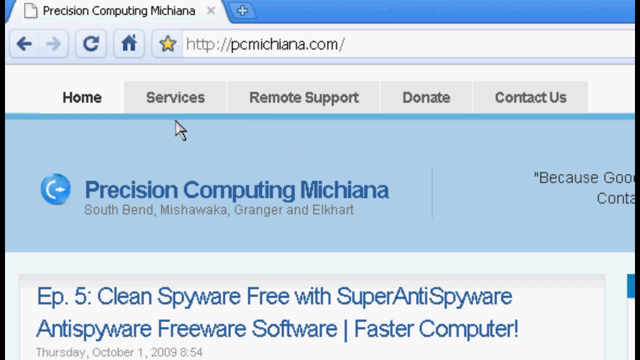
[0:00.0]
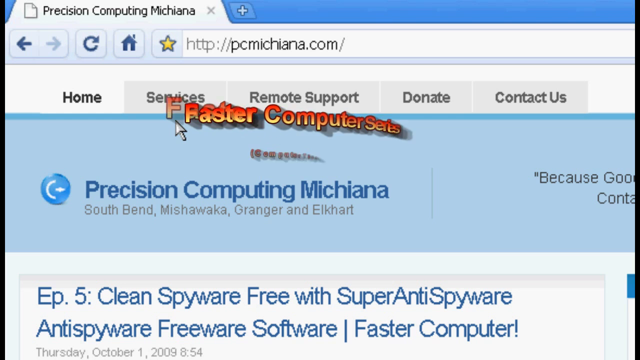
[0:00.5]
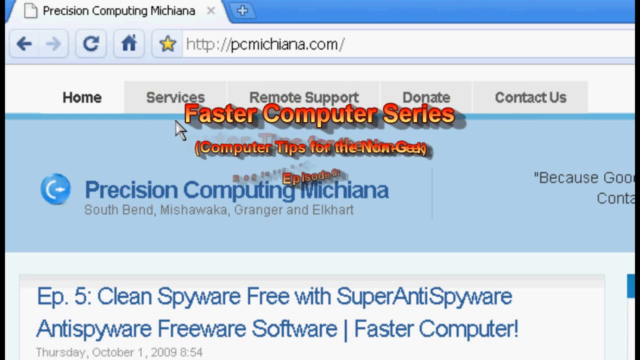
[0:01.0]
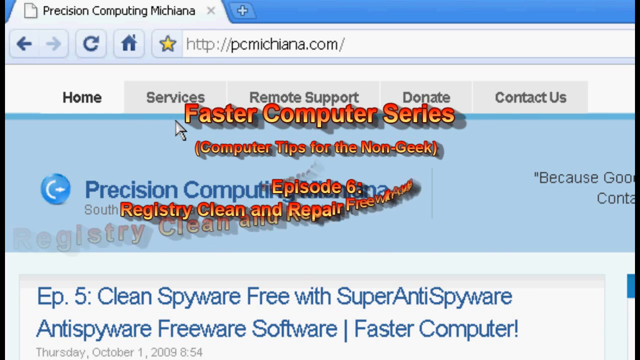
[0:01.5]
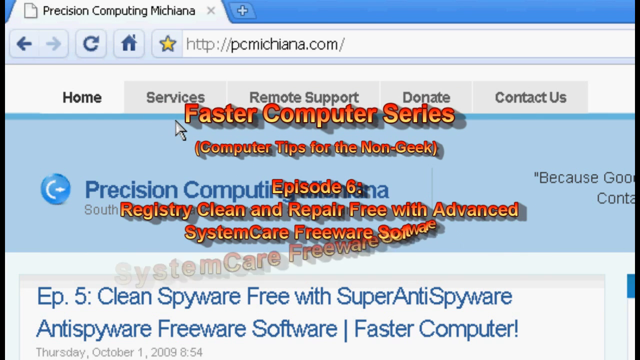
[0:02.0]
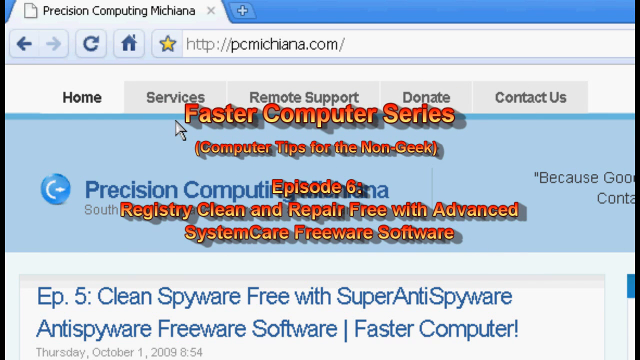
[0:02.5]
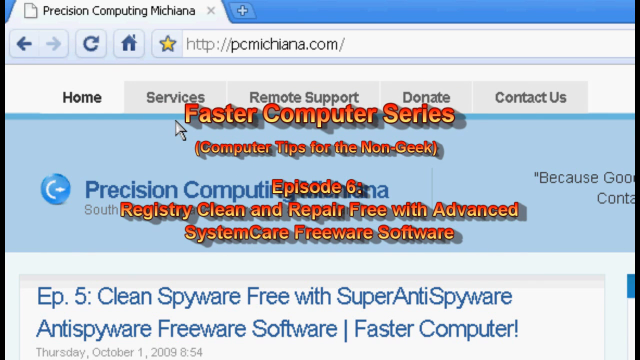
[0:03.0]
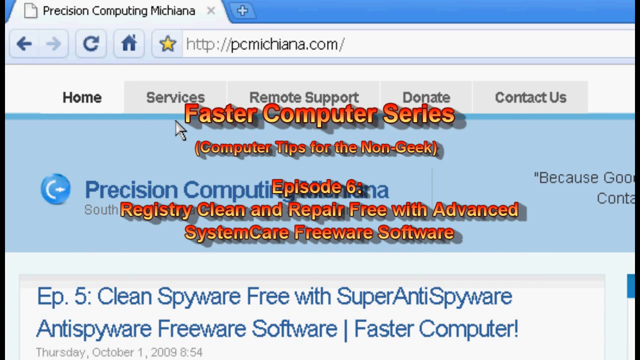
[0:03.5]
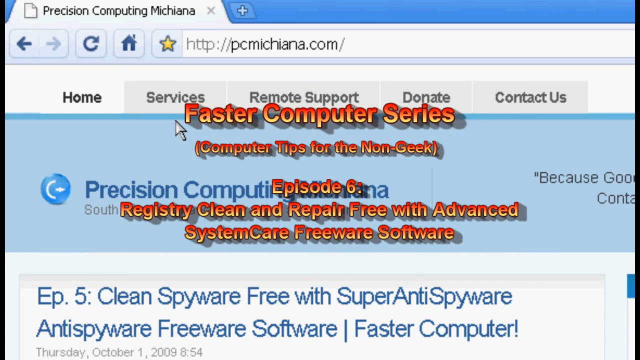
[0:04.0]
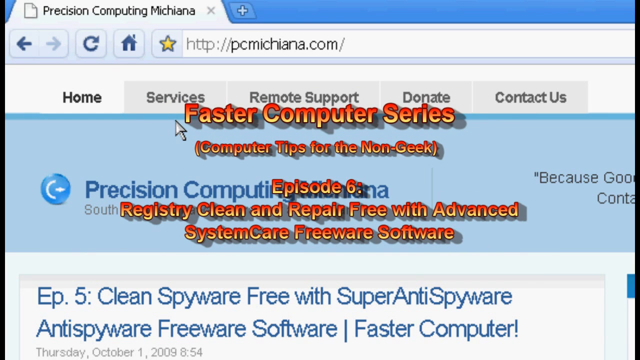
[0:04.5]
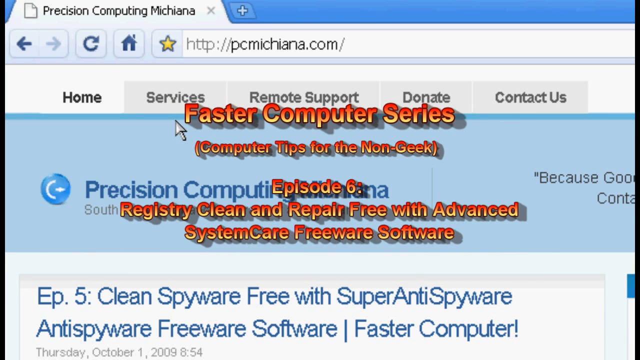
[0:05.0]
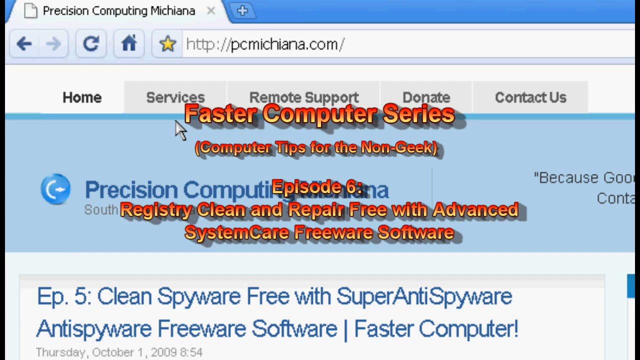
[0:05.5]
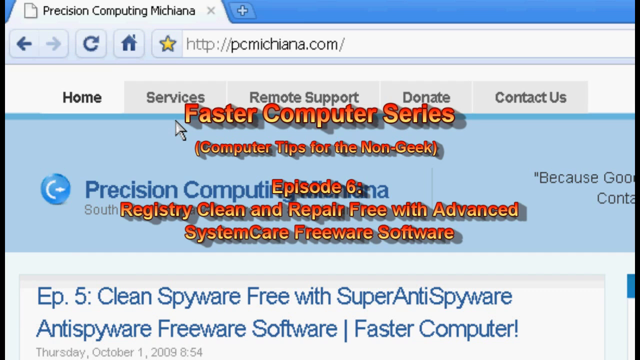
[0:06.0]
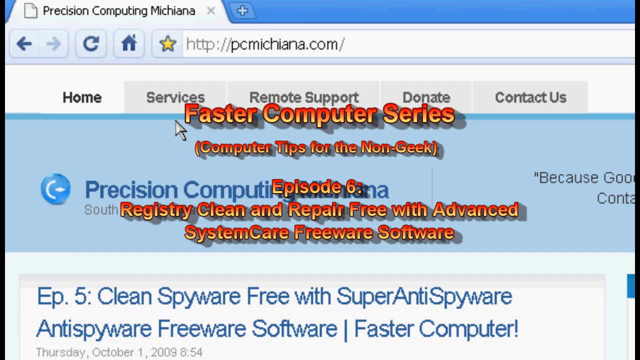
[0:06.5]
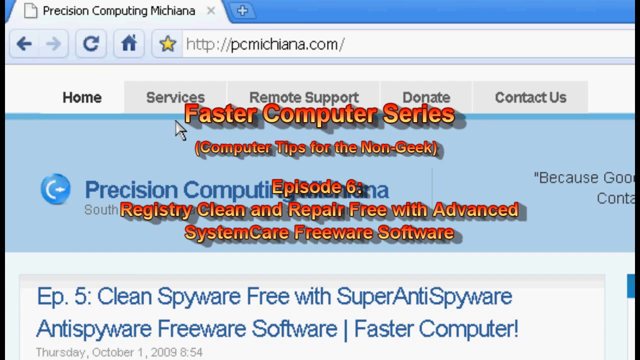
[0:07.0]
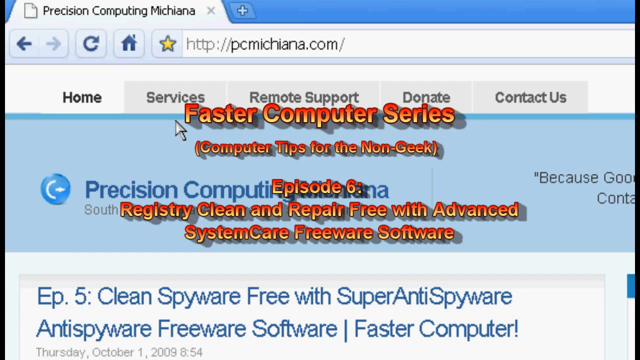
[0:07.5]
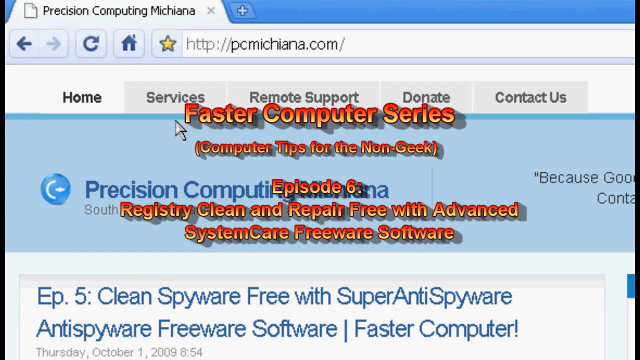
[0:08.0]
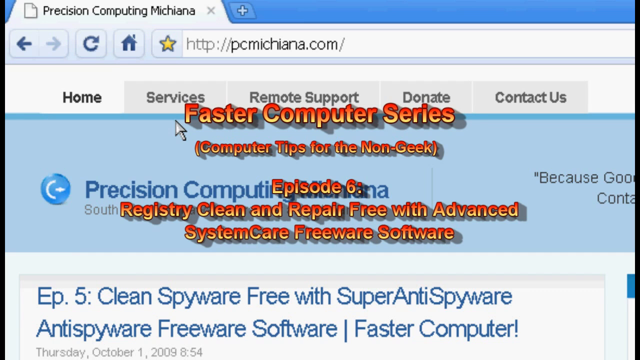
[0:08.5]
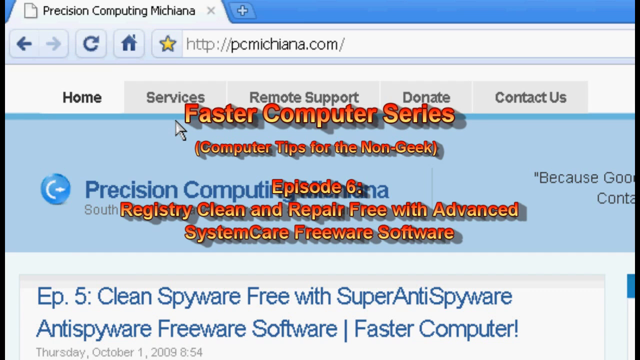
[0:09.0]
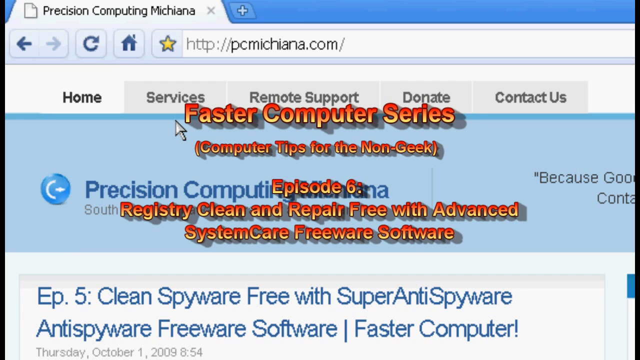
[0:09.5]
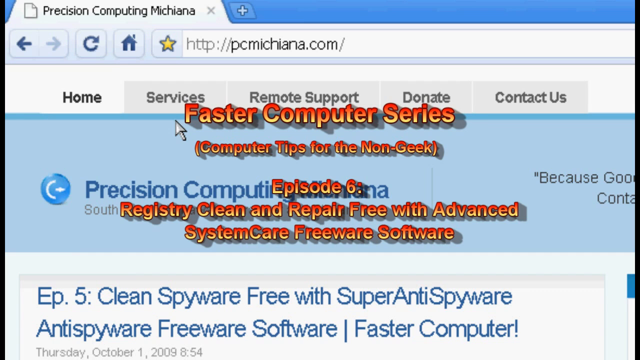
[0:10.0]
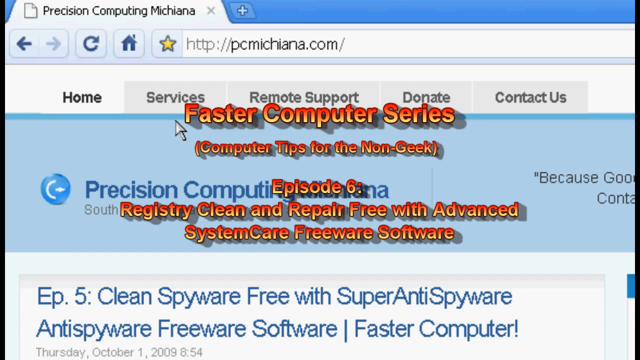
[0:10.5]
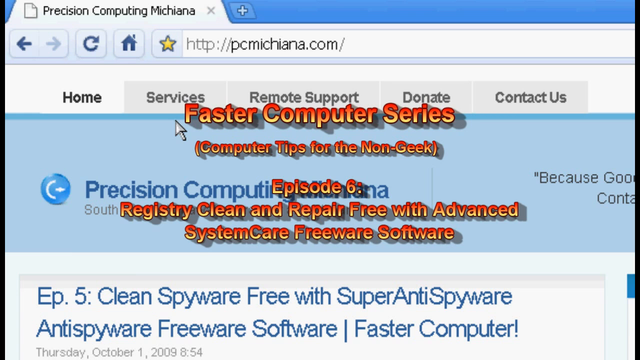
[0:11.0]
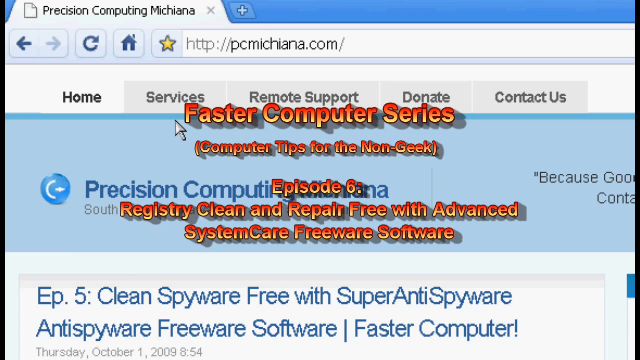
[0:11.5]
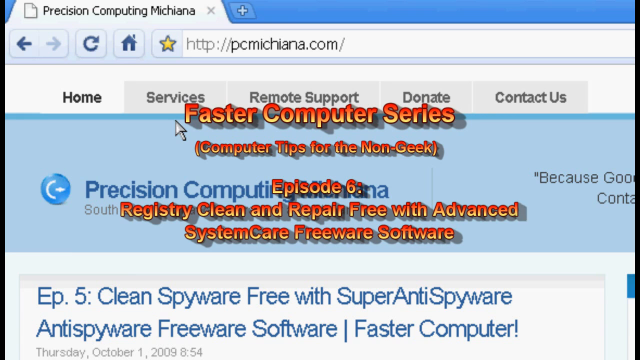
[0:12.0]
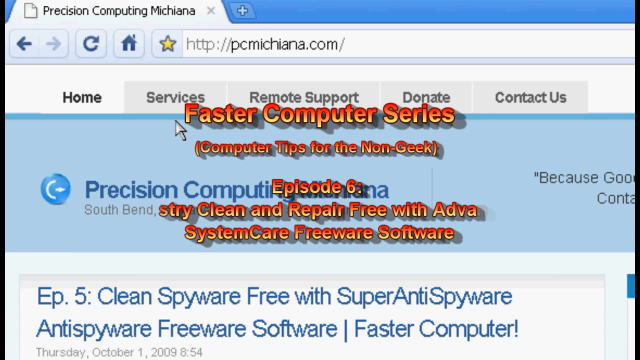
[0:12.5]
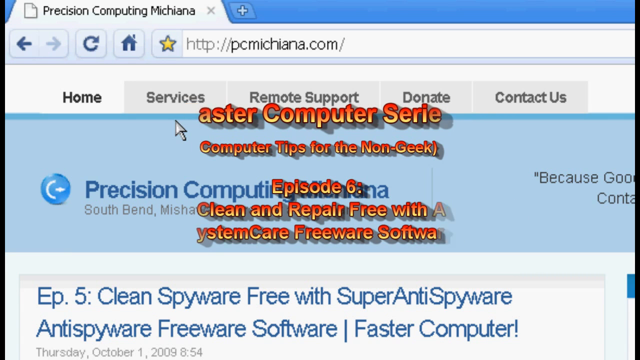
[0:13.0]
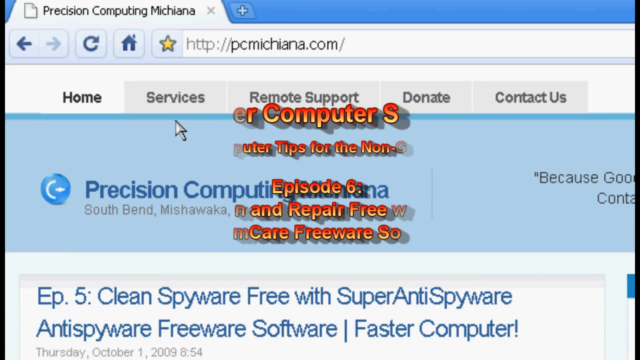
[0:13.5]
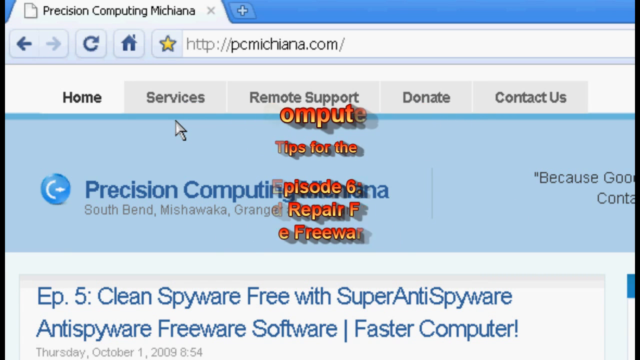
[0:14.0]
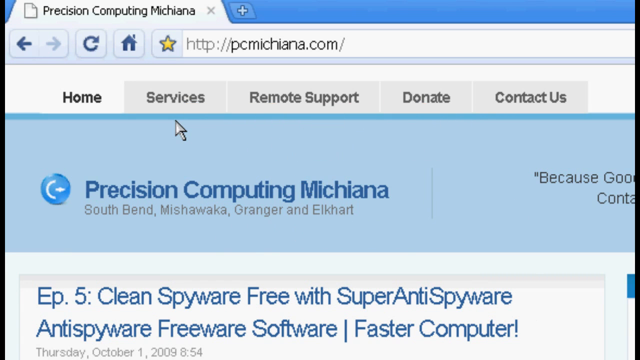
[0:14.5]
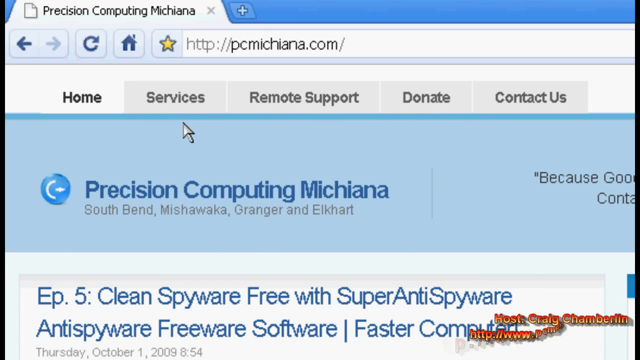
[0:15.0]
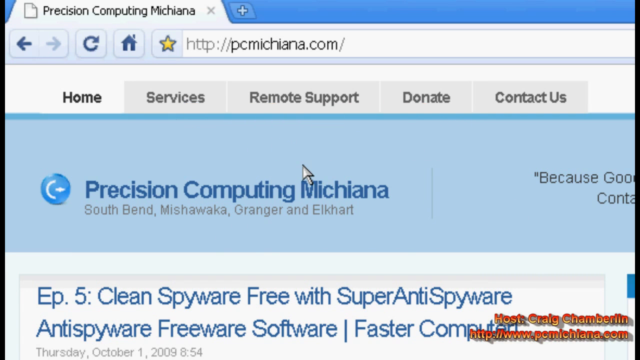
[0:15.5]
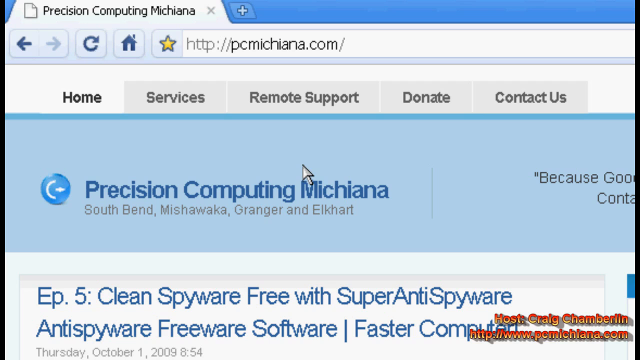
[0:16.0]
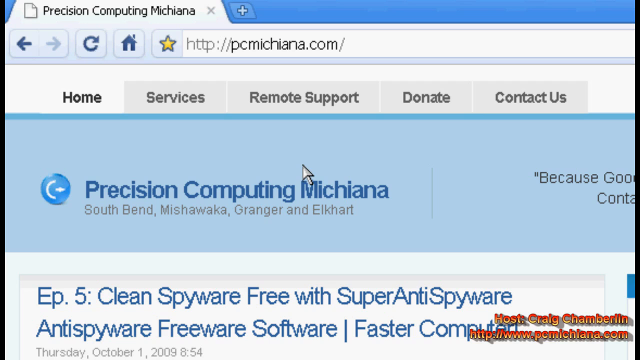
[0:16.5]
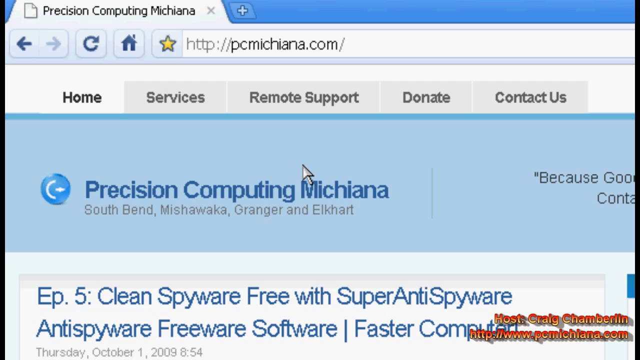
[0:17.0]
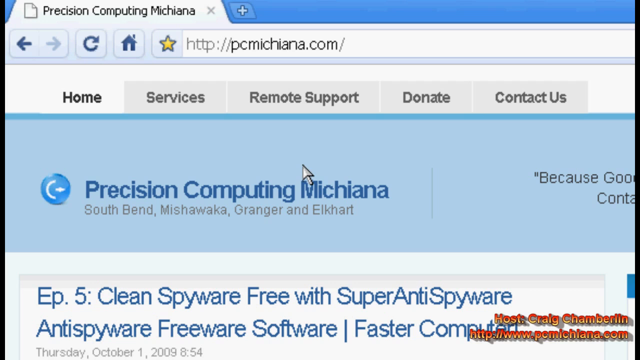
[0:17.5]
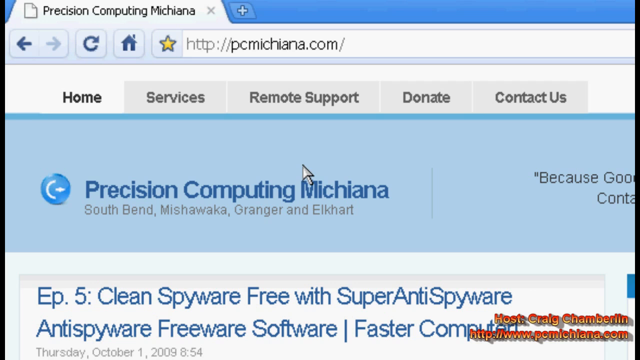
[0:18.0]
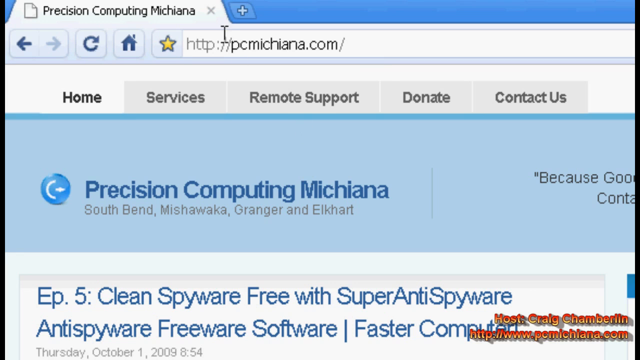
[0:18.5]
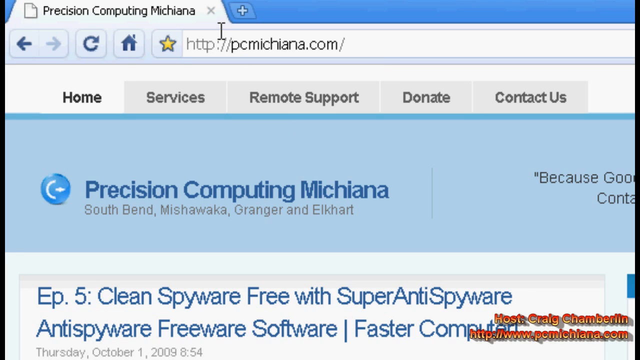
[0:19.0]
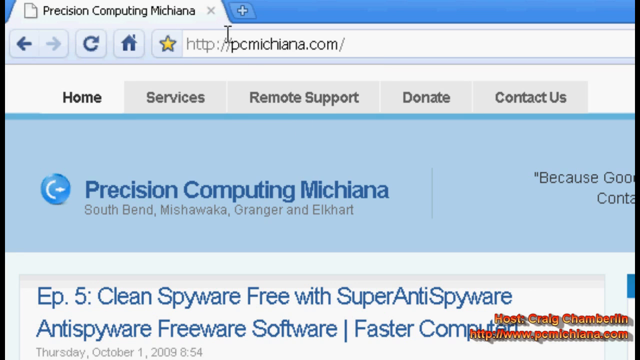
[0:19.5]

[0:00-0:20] A website fills the background. In the top left-hand corner, a white tab reads "Precision Computing Michiana," and the site belongs to a company. Along the top are gray tabs for "Home," "Services," "Remote Support," "Donate," and "Contact Us." Bold red lettering on the screen reads "Faster Computer Series, Computer Tips for the Non-Geek," followed by "Register, Clean, and Repair Free with Advanced." This is the opening page, and the video indicates this is Episode 6 of the series, possibly a YouTube video. A white cursor moves up and across different portions of the web page.